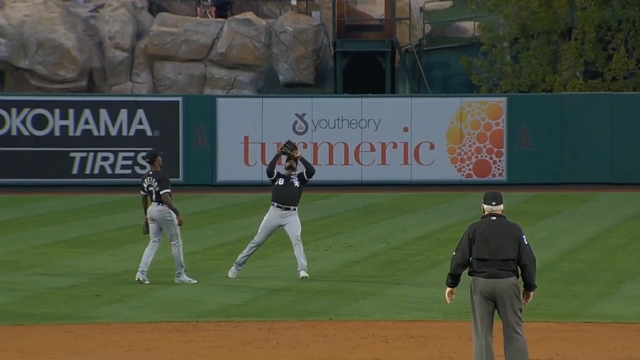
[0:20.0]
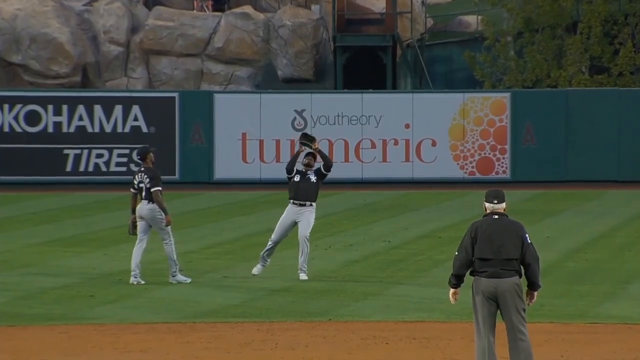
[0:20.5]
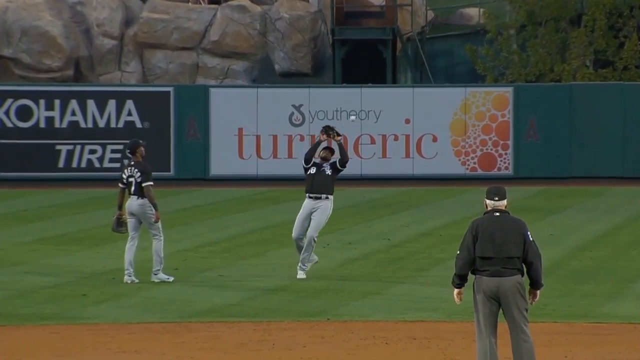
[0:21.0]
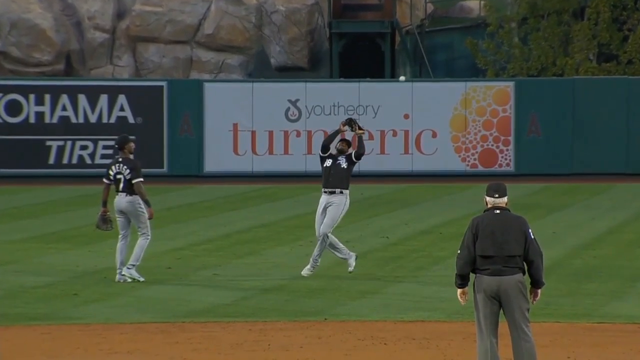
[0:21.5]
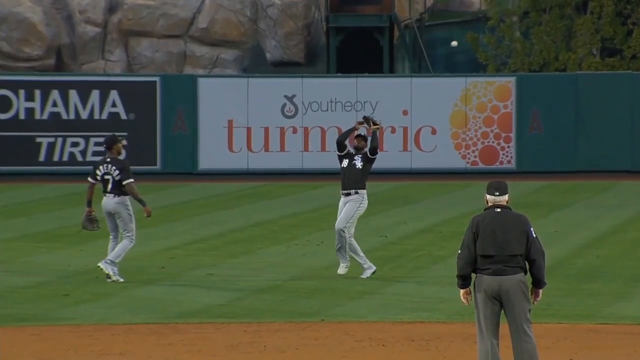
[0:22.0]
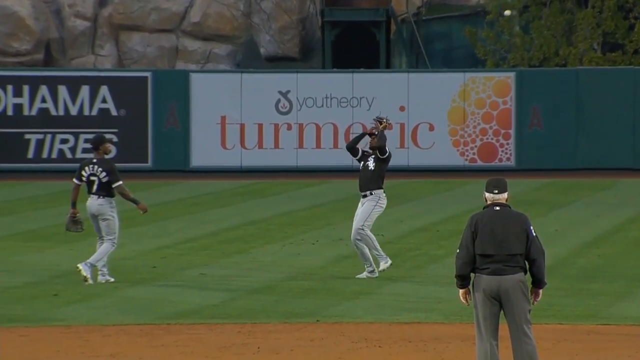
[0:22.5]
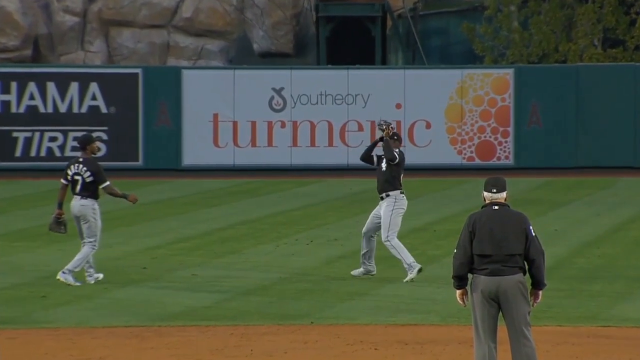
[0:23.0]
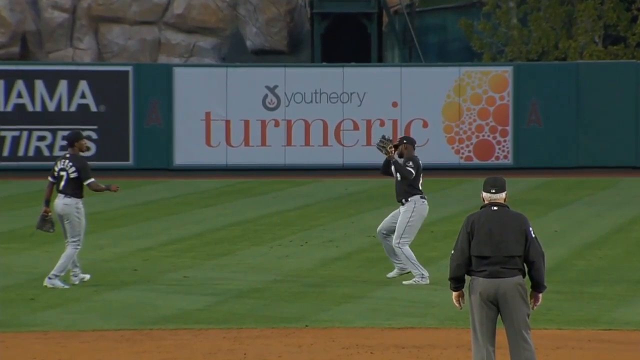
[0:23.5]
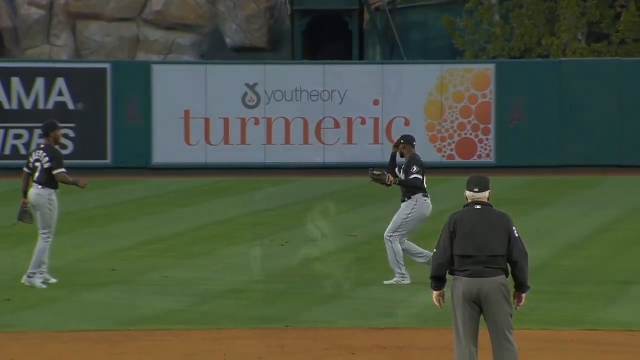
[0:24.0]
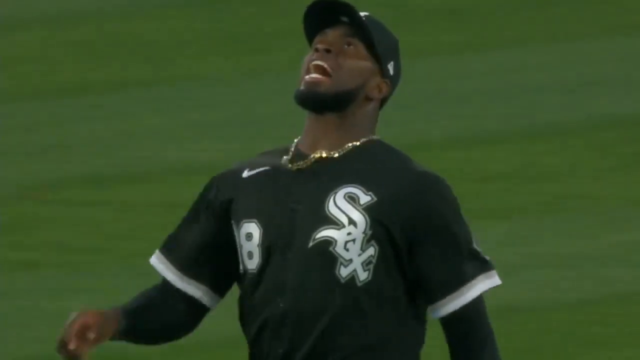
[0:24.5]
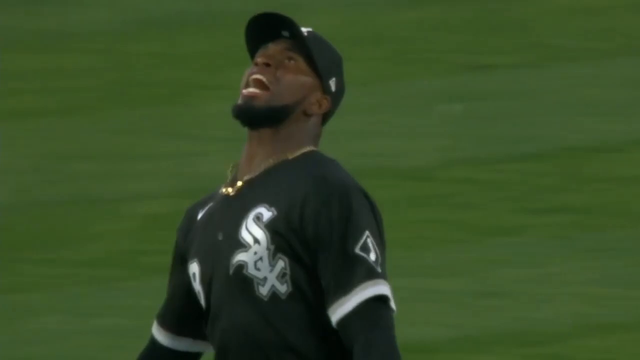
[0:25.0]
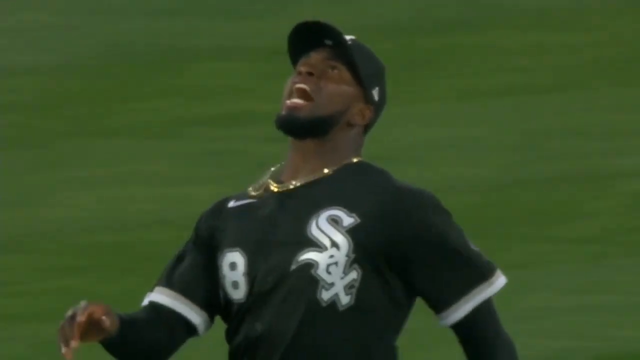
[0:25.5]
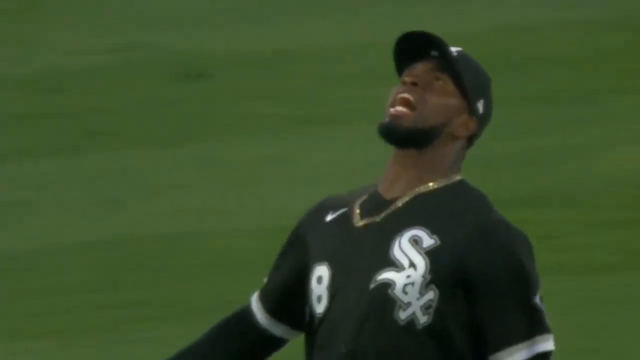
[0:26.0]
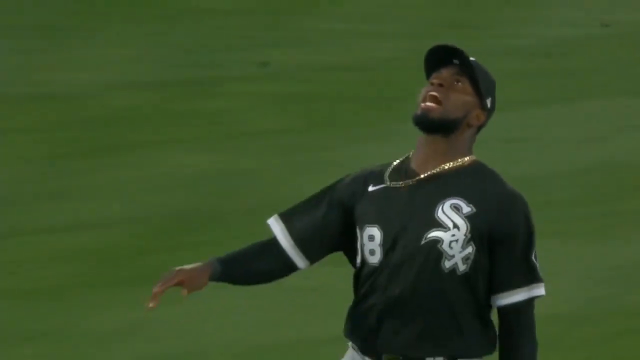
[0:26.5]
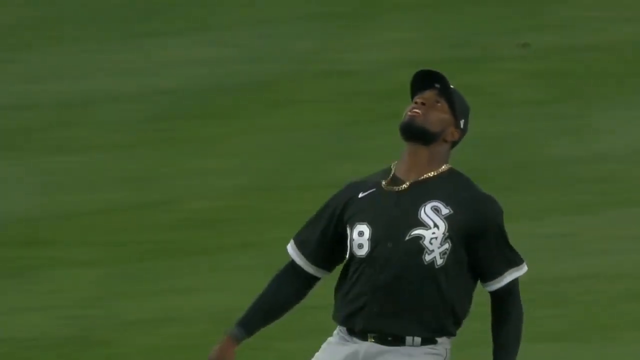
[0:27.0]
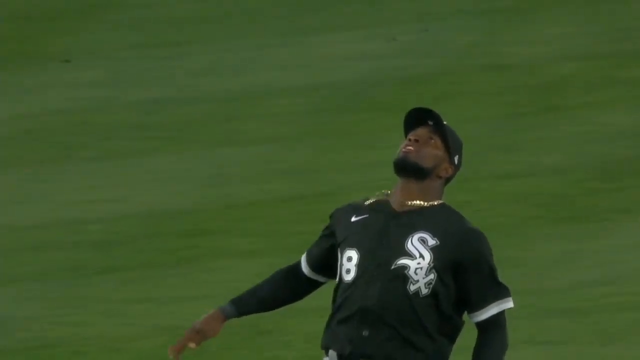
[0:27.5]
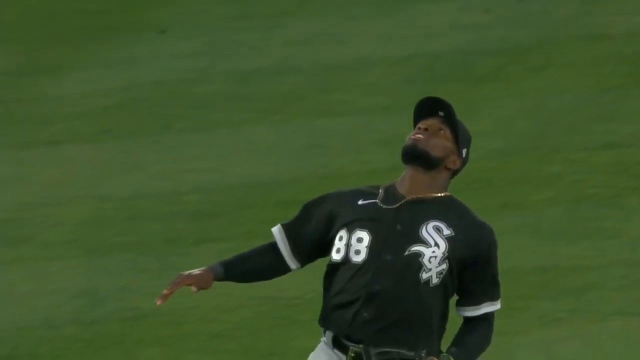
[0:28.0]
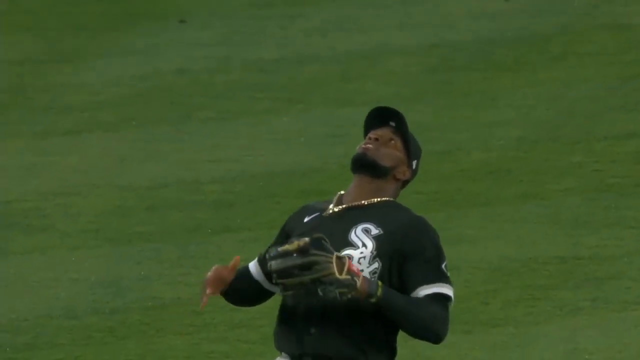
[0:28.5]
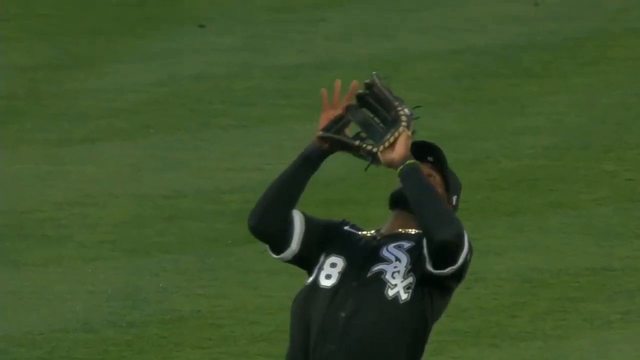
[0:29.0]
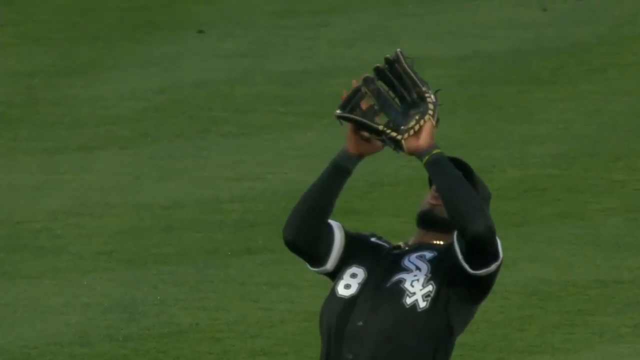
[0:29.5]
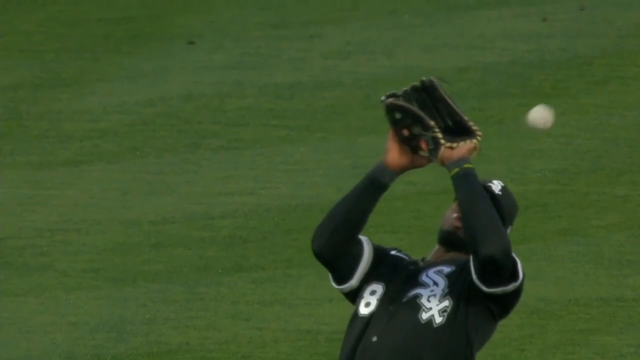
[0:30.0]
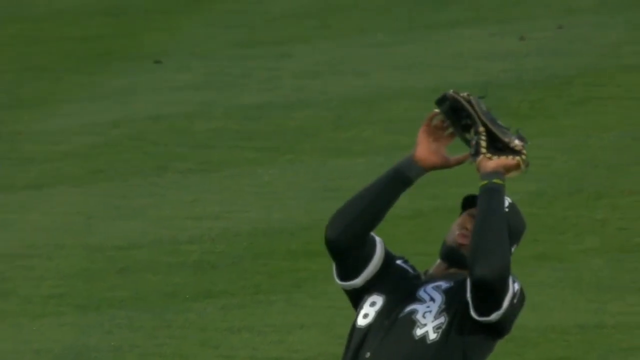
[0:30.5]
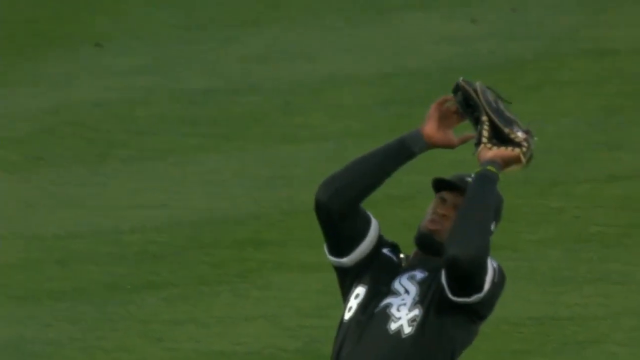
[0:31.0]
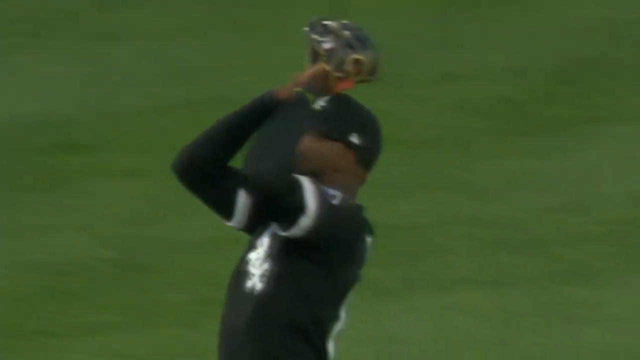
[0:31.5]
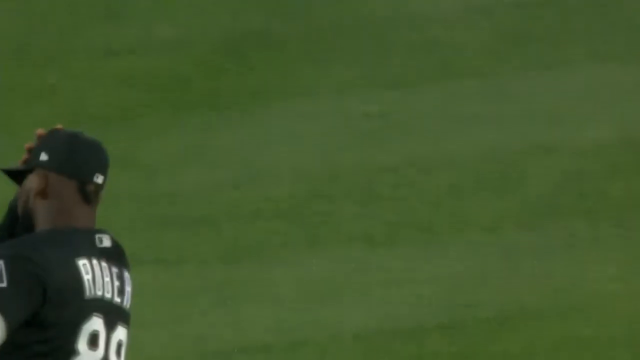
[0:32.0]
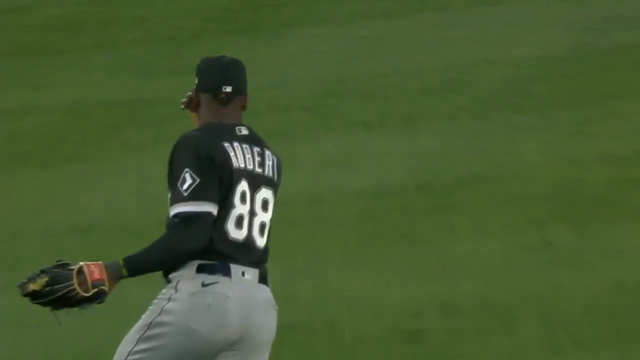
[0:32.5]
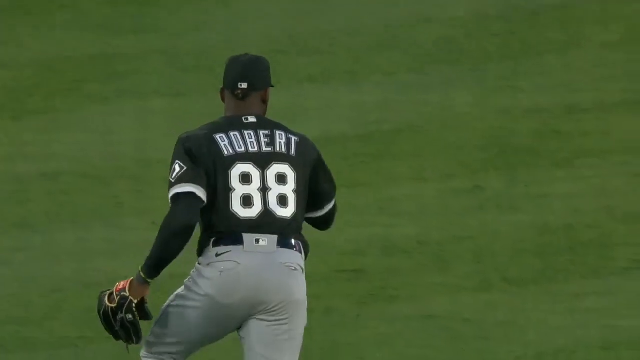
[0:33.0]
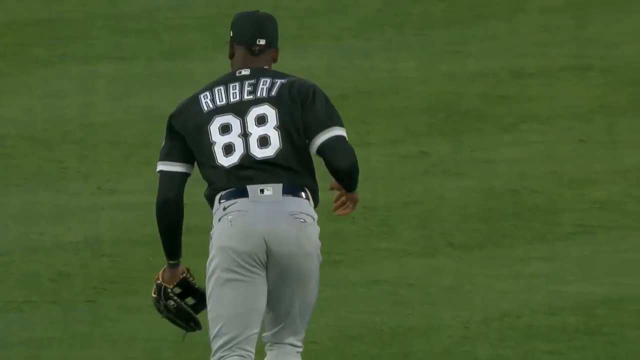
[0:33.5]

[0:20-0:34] Instant replay footage shows the White Sox player who attempts to catch the pop fly; the ball bounces off his glove and apparently off his head as well. A zoomed-in camera angle then shows the player running, looking upward with his mouth open, seemingly saying "I got it, I got it." He keeps looking up, tracking the ball, raises his left glove, and puts his right hand up next to the glove for support. The ball bounces off the edge of his glove and then off the top of his hat. He turns around and puts his right hand on his head, and his jersey shows his last name, Robert, and the number 88 for the White Sox.